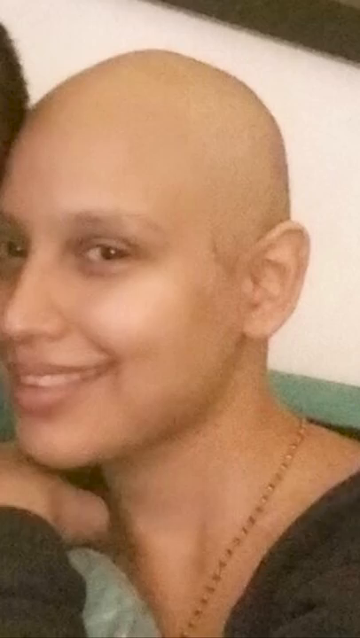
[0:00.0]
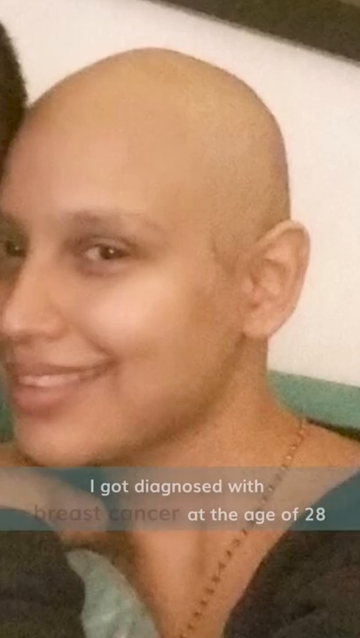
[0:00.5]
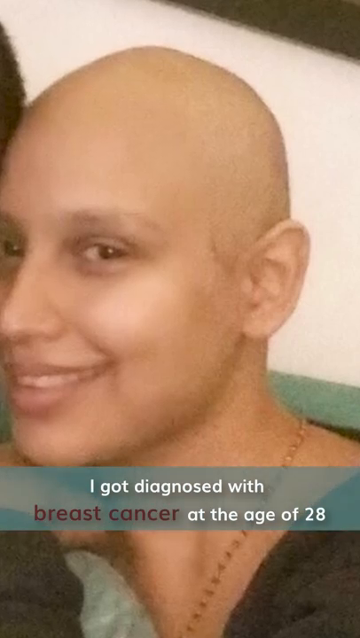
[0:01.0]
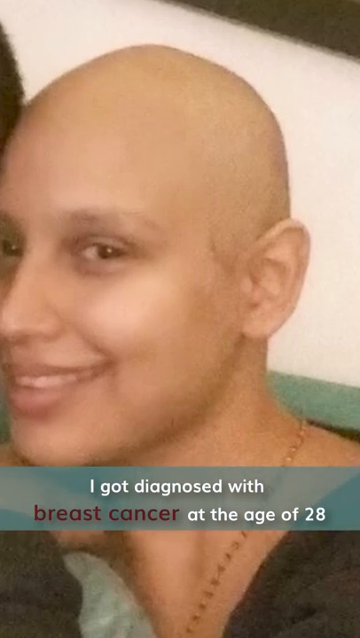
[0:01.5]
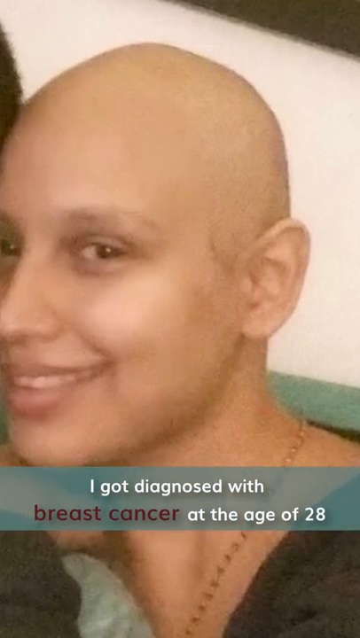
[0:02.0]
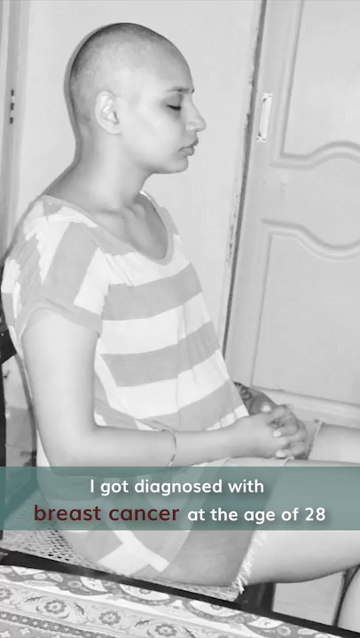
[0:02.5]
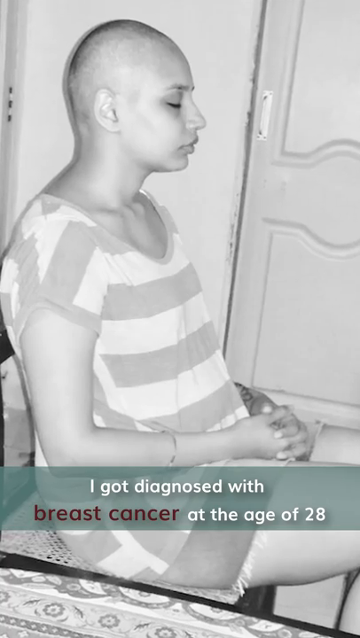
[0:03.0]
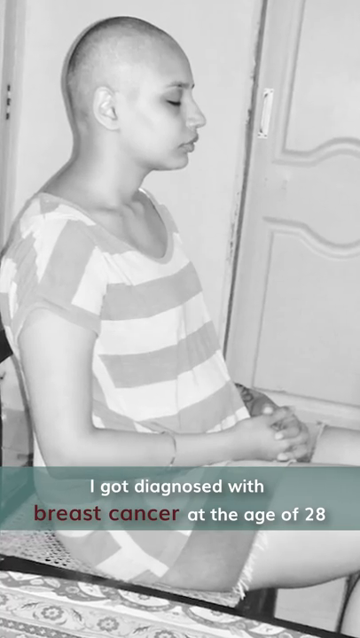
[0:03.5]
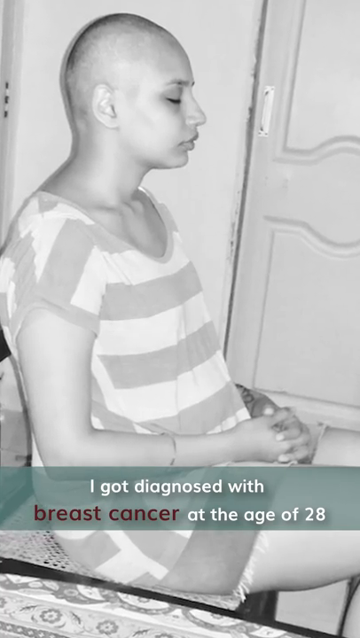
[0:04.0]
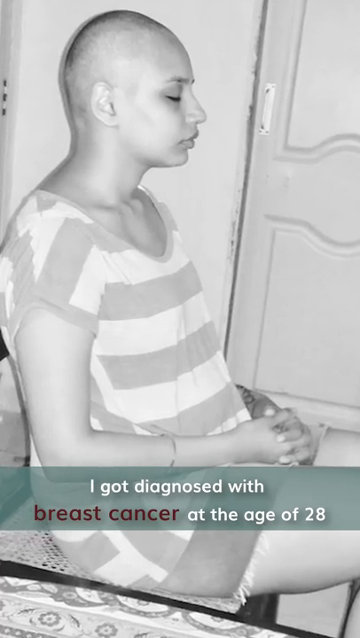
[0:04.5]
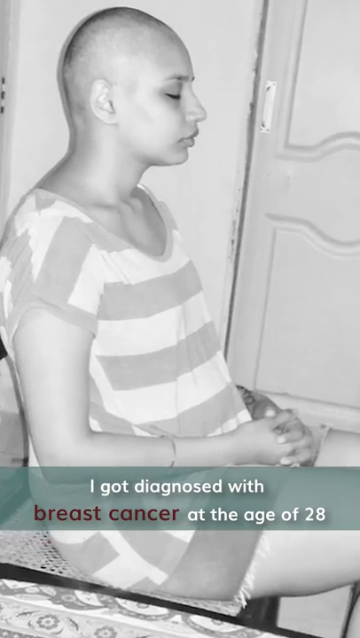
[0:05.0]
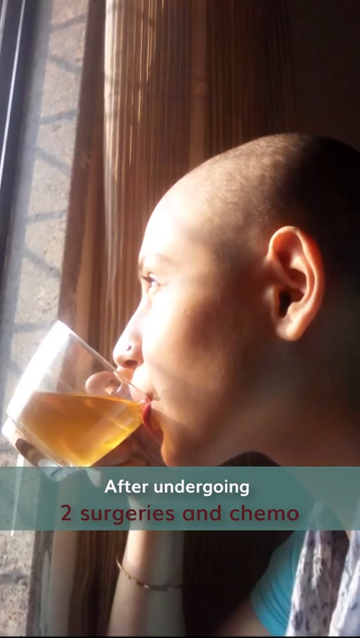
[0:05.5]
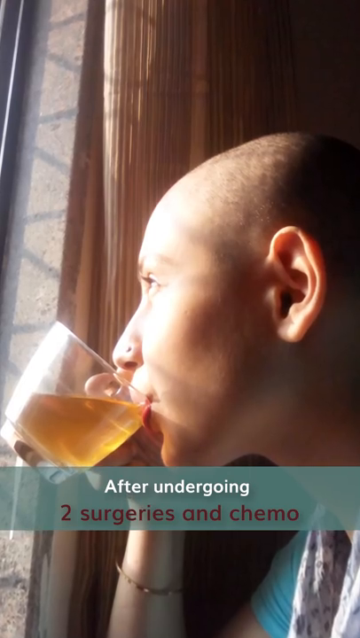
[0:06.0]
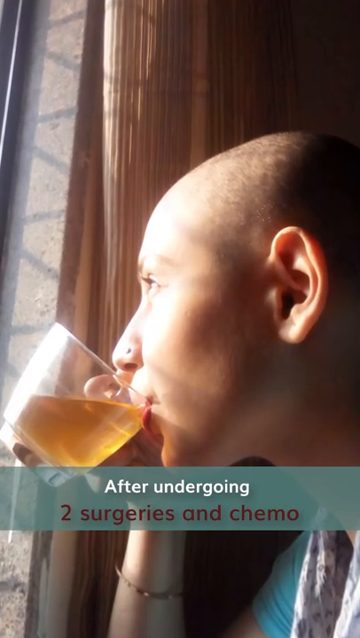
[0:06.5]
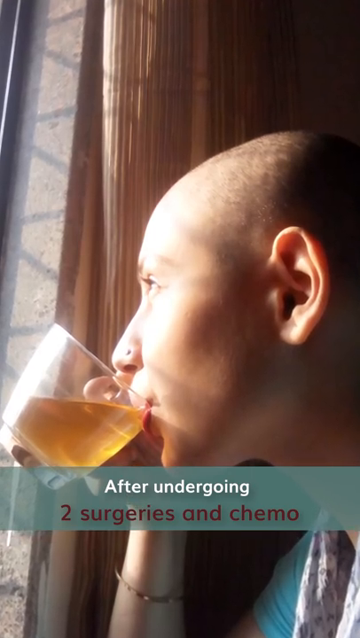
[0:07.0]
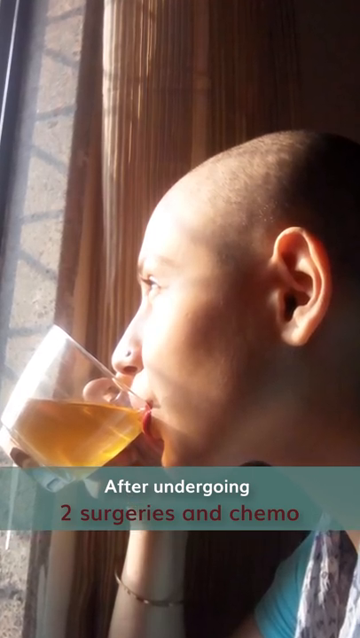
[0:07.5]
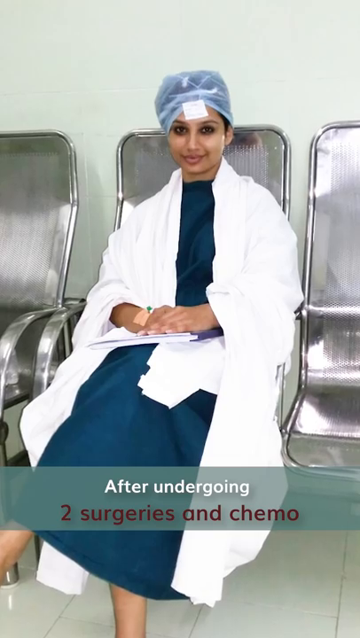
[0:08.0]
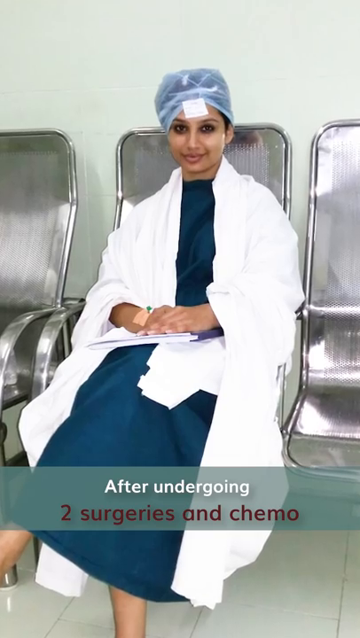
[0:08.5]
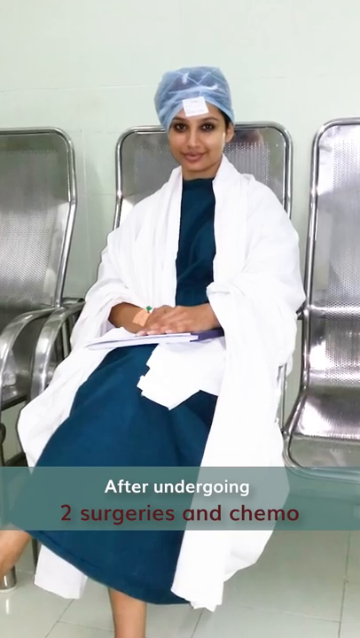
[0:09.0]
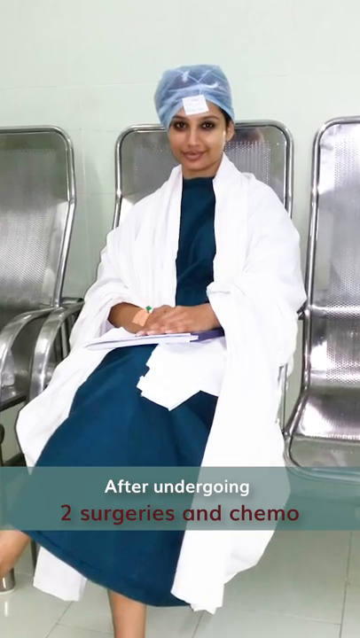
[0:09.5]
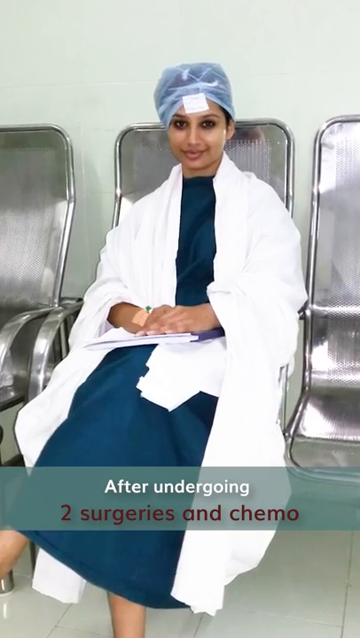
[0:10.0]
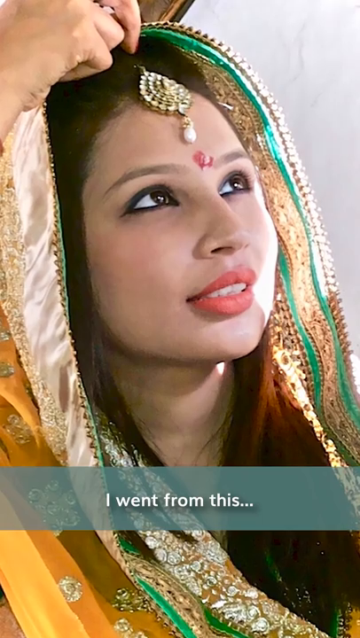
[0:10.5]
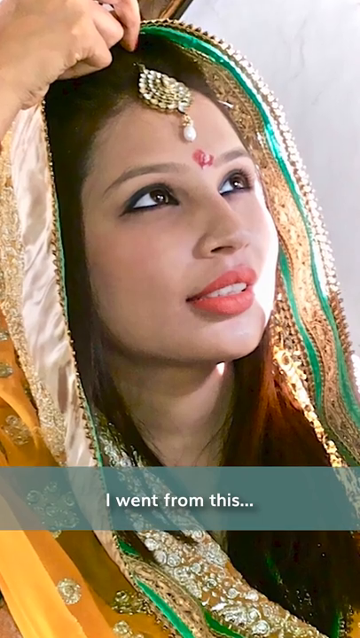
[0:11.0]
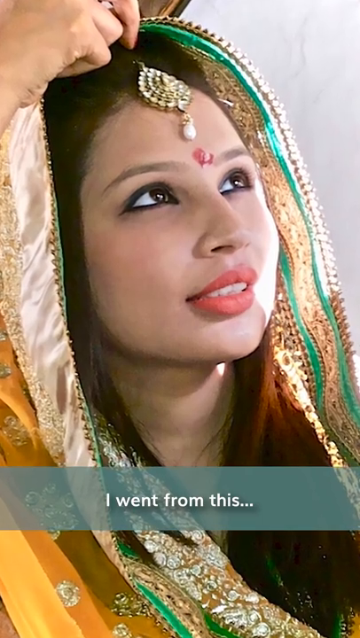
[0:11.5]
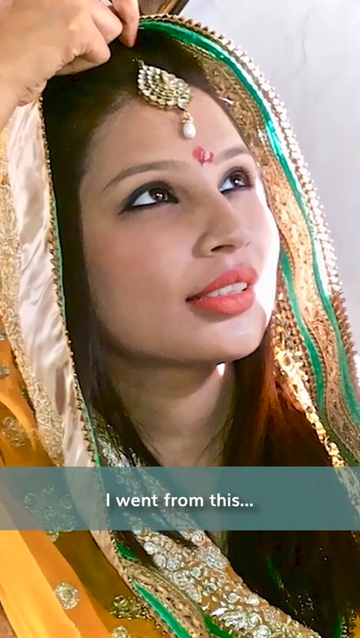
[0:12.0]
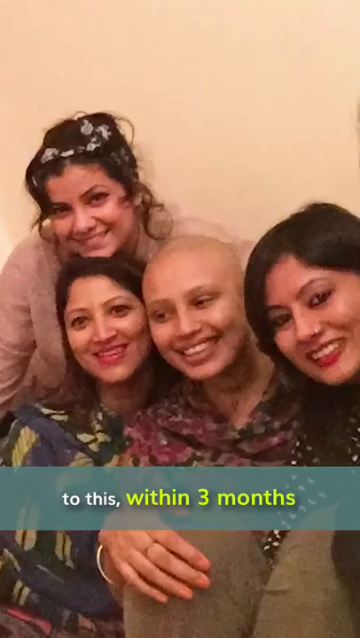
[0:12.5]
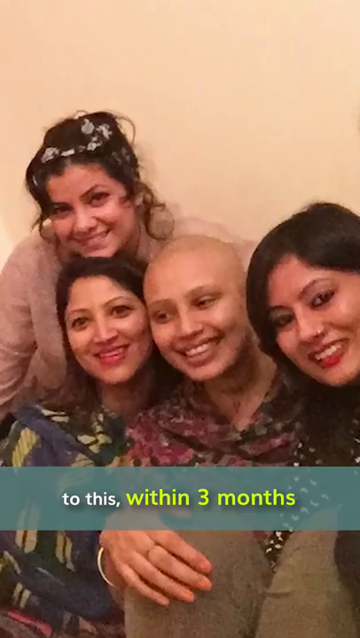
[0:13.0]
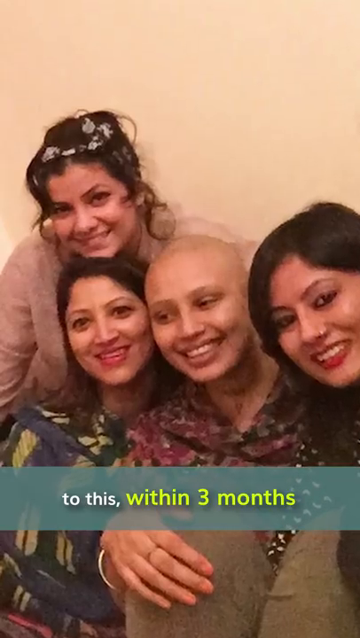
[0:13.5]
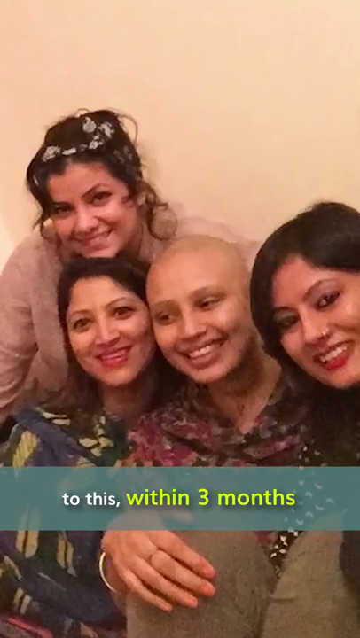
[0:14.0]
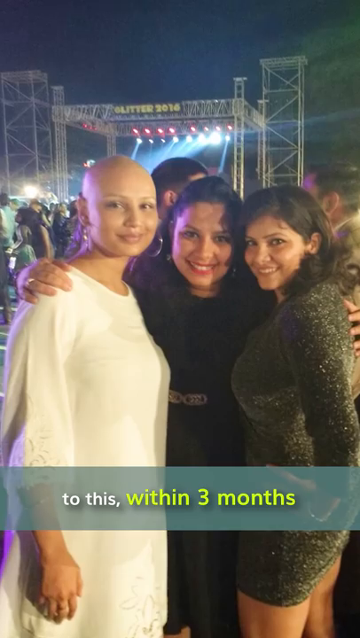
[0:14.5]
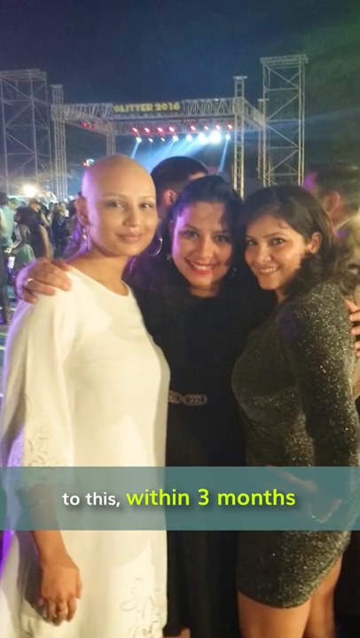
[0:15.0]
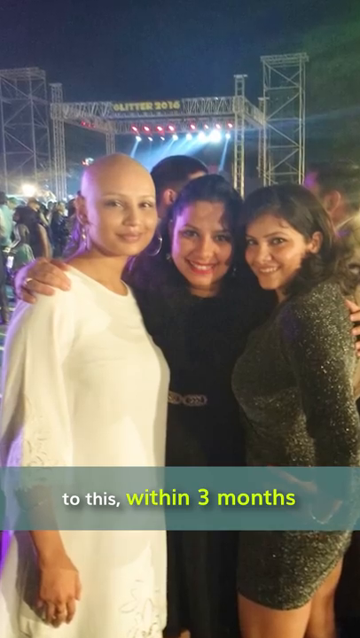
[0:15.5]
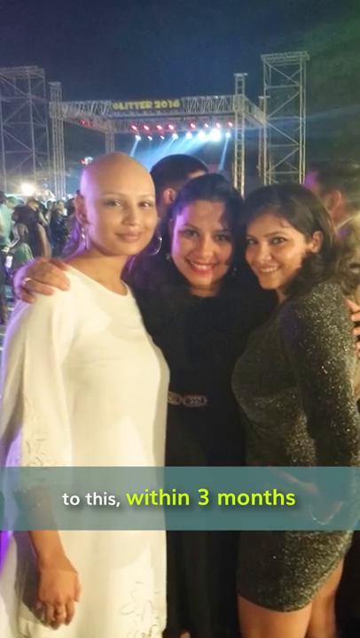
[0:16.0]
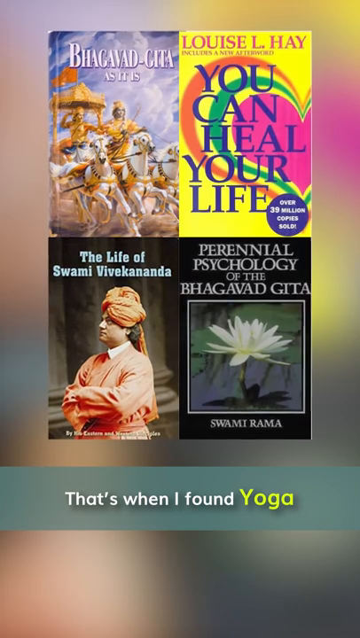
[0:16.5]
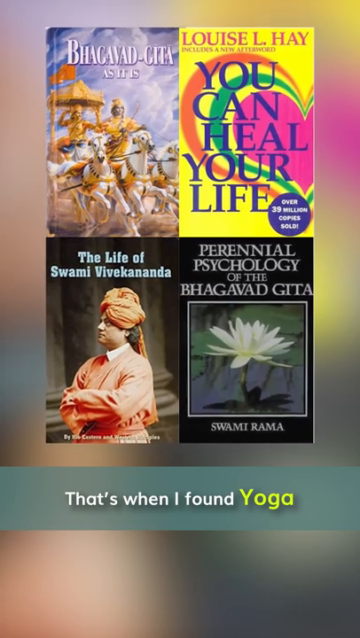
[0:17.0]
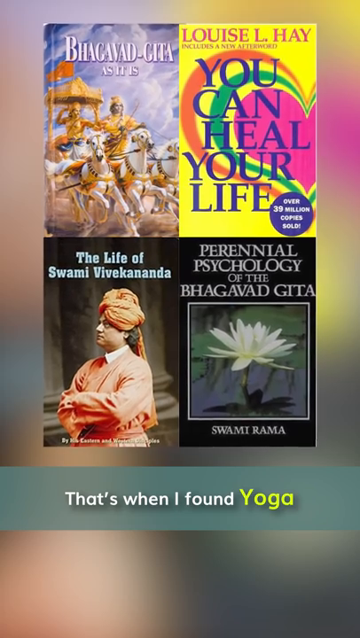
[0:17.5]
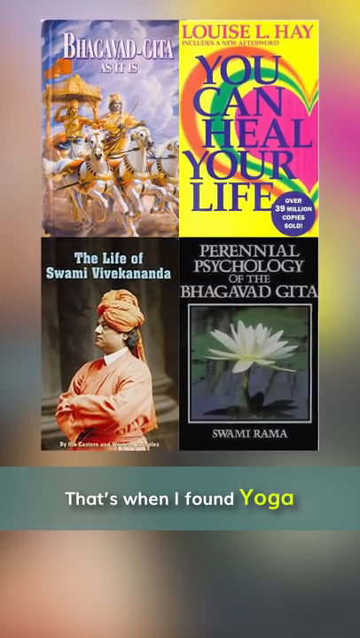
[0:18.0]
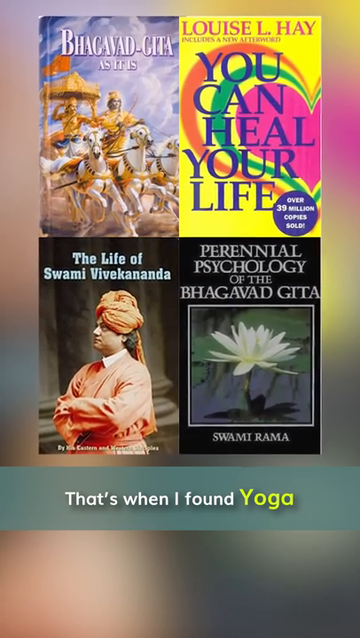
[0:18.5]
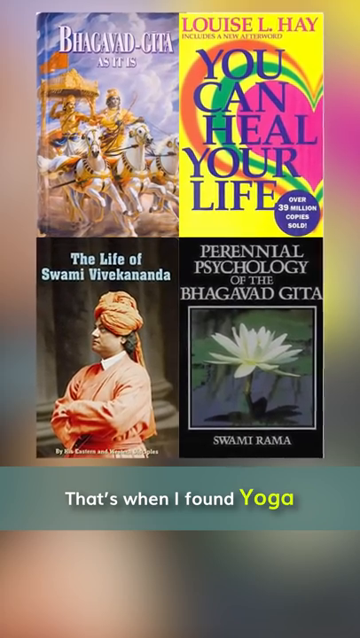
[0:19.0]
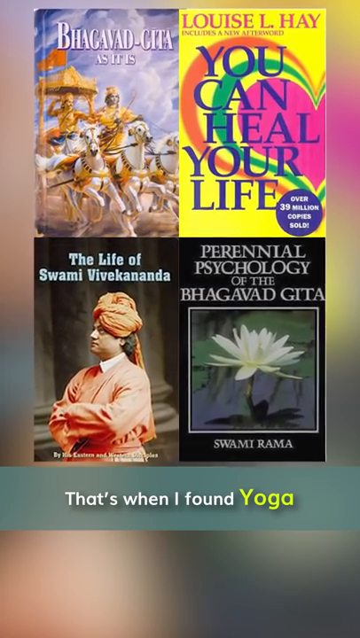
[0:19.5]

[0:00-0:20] On-screen text reads "How yoga helped me in my cancer jo...", cut off with an ellipsis. A woman with no hair and a bald head is shown, and there is a picture of a book, "How you can heal your life." She appears to be a cancer patient because she has no hair. Text says "after undergoing two surgeries and chemo, I went from this to this within three months," alongside an image of her bald. Text also states that she then found yoga and that she was diagnosed with breast cancer at the age of 28. The images cycle through pictures of her drinking tea and of her changing from a healthy young woman to a woman with no hair, though she does not otherwise look very sick. Apart from the book, the video shows only pictures of her with hair and without hair.